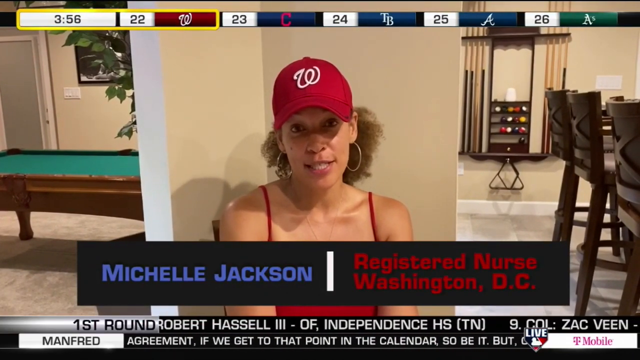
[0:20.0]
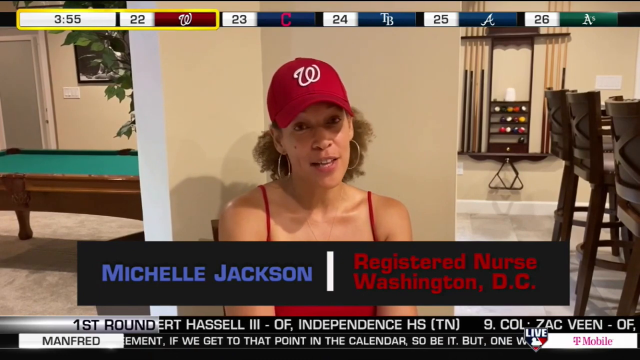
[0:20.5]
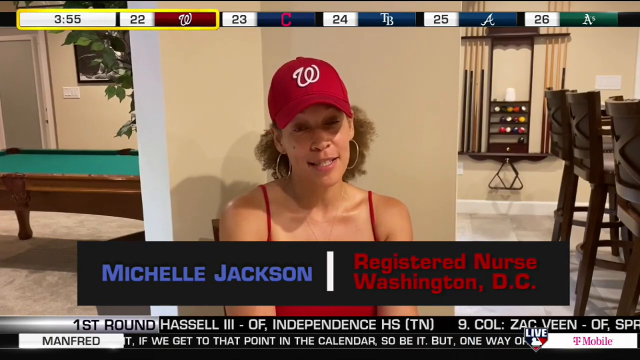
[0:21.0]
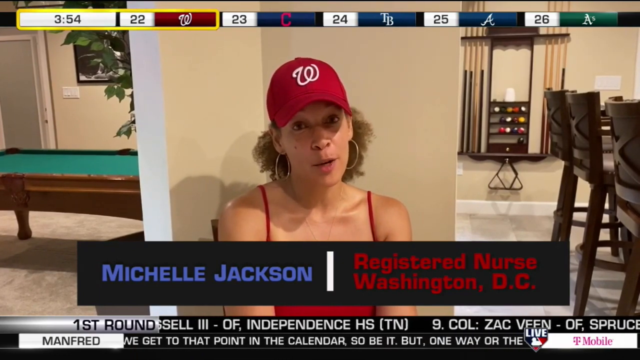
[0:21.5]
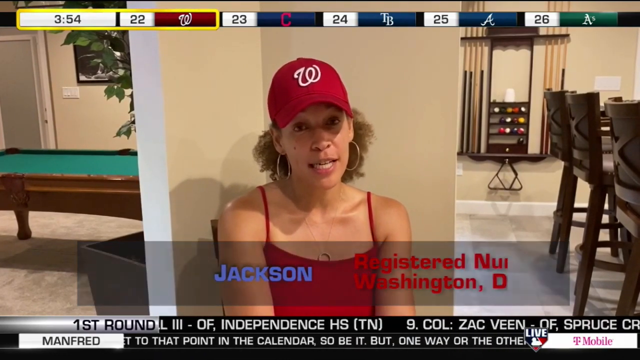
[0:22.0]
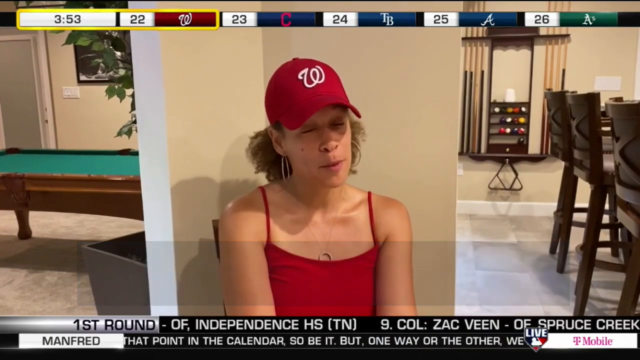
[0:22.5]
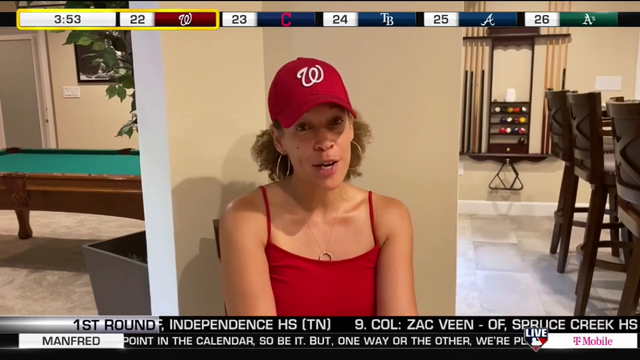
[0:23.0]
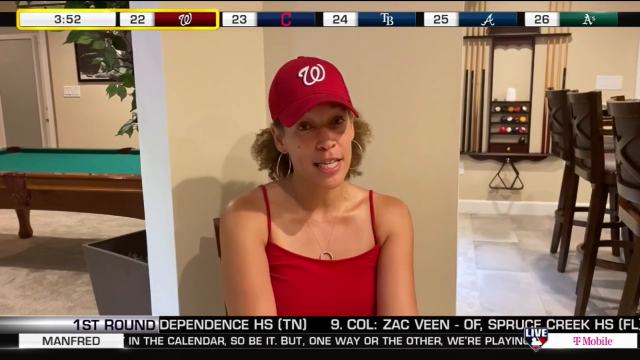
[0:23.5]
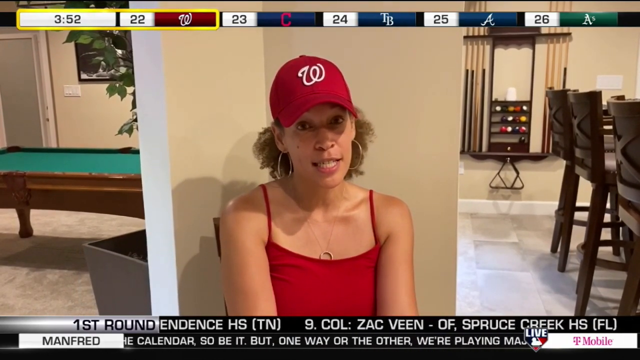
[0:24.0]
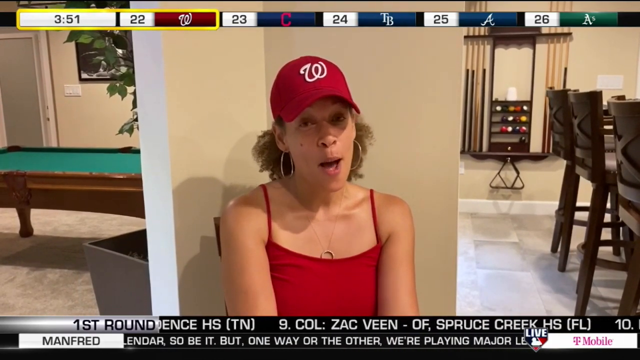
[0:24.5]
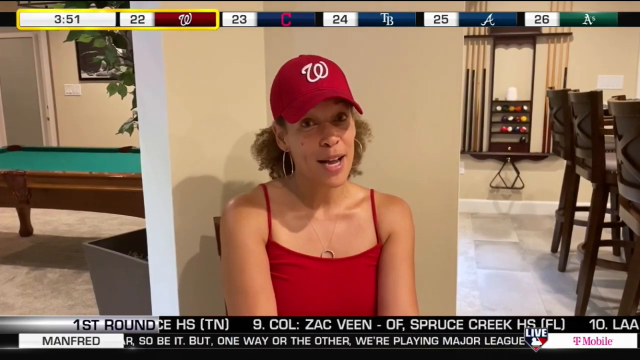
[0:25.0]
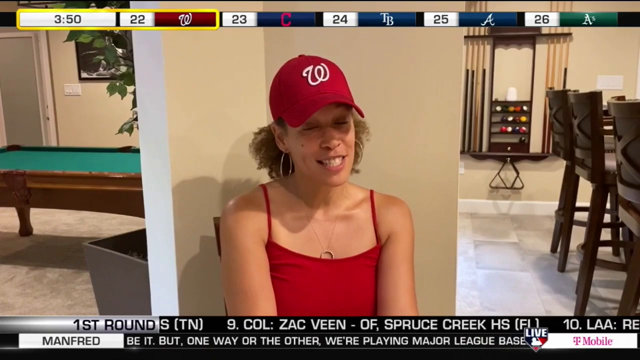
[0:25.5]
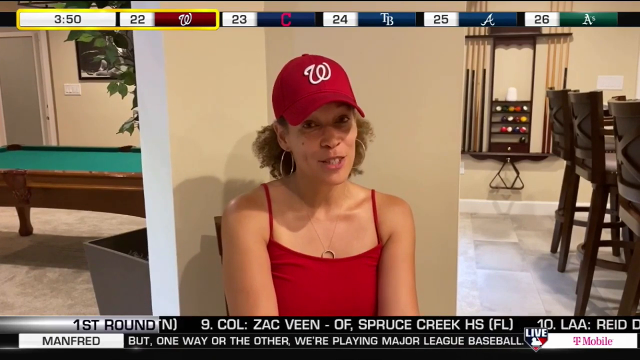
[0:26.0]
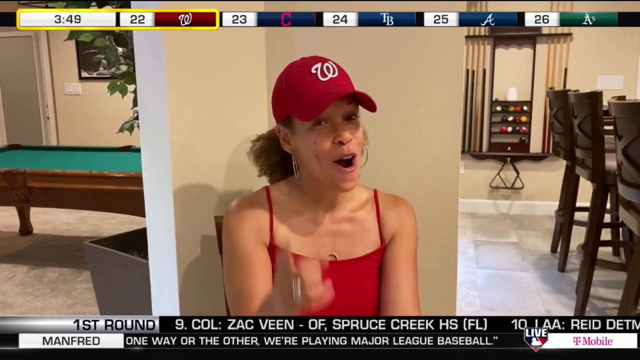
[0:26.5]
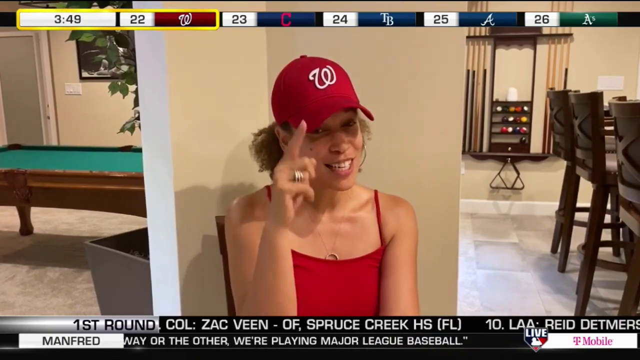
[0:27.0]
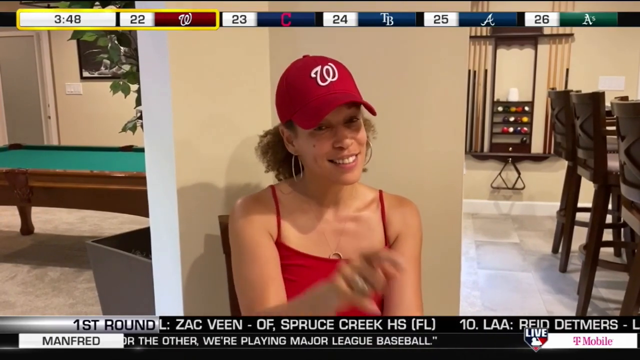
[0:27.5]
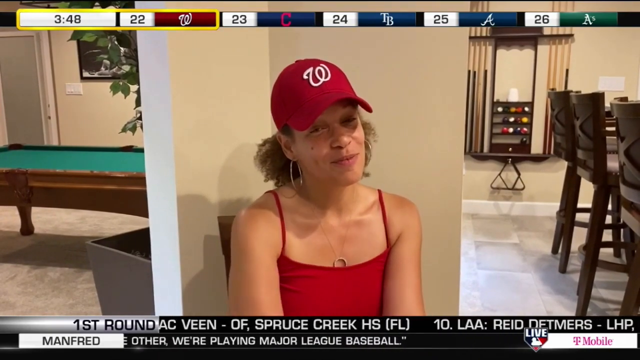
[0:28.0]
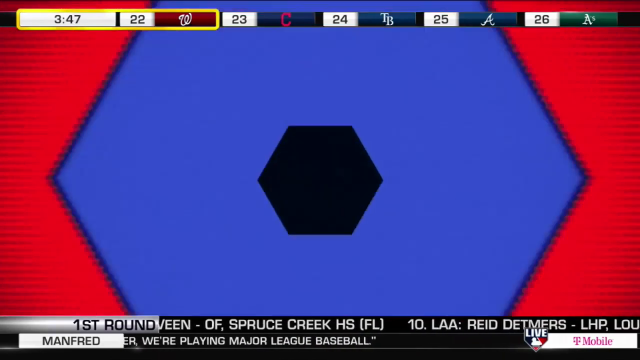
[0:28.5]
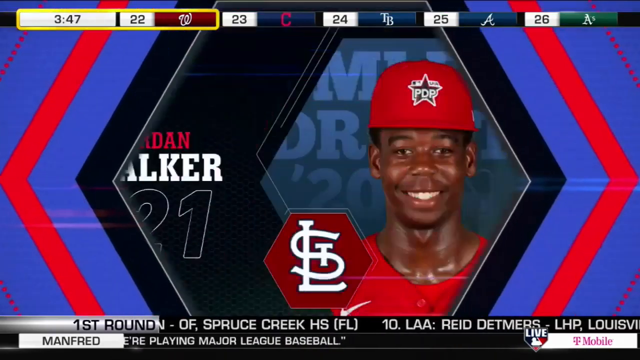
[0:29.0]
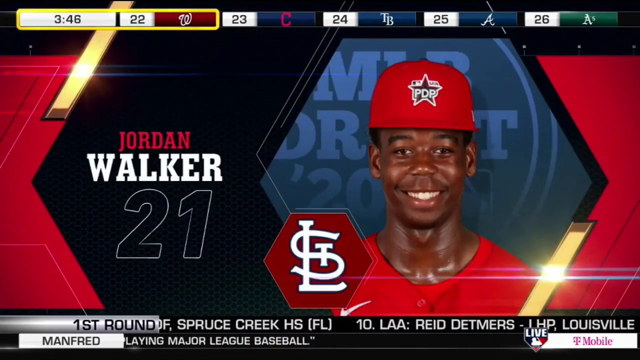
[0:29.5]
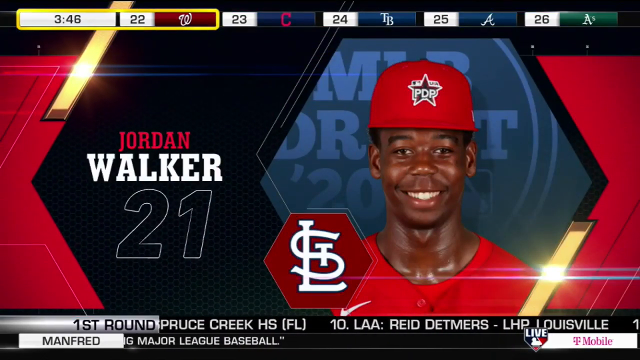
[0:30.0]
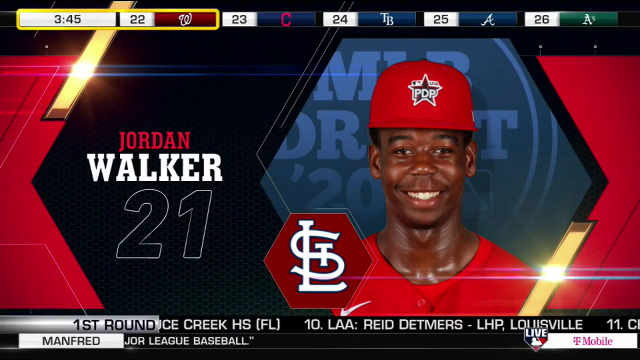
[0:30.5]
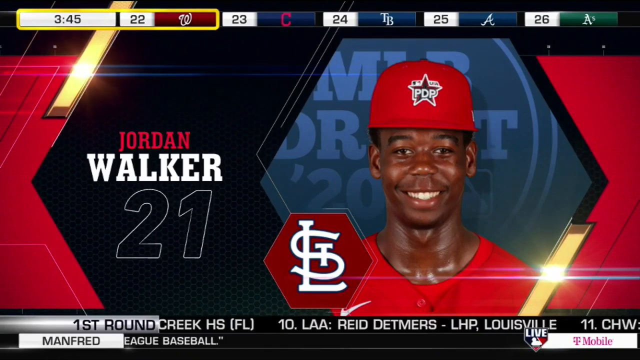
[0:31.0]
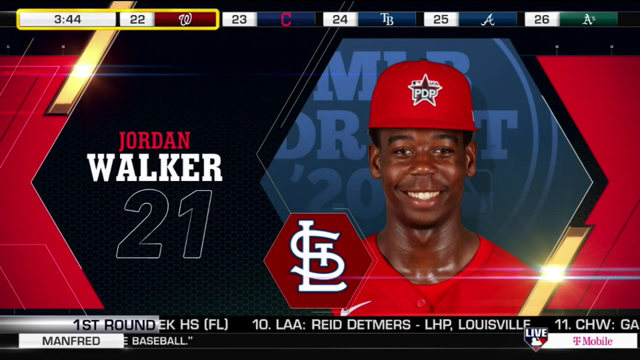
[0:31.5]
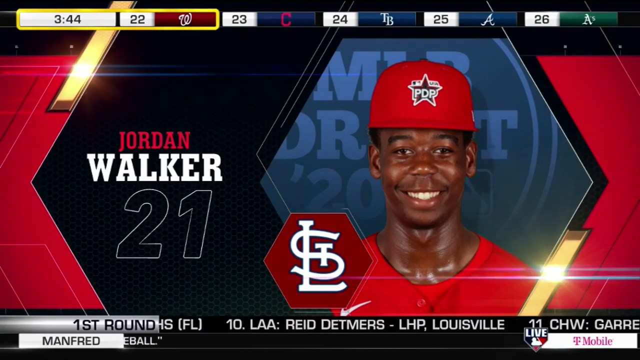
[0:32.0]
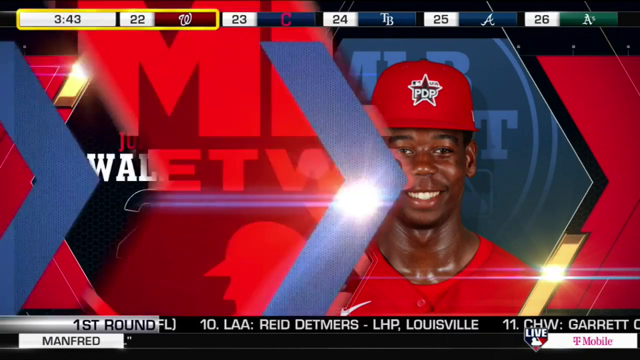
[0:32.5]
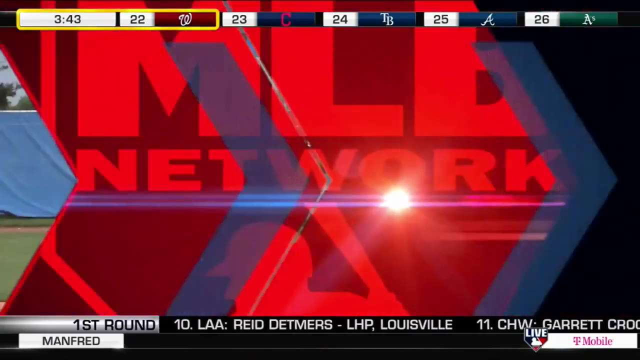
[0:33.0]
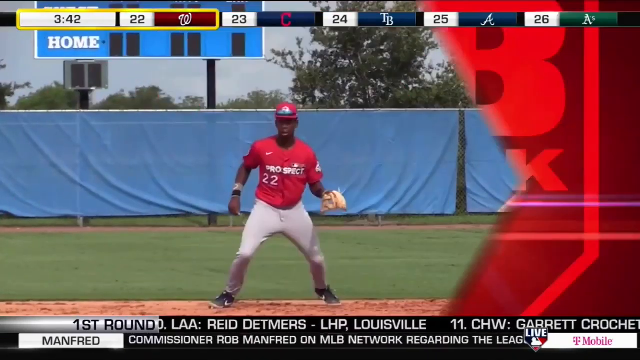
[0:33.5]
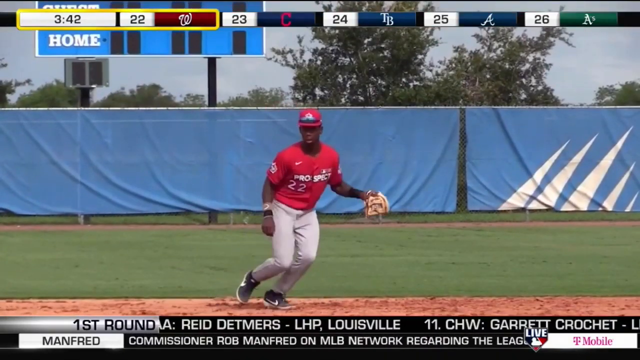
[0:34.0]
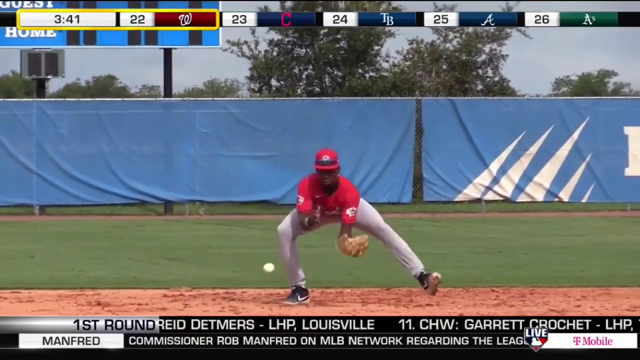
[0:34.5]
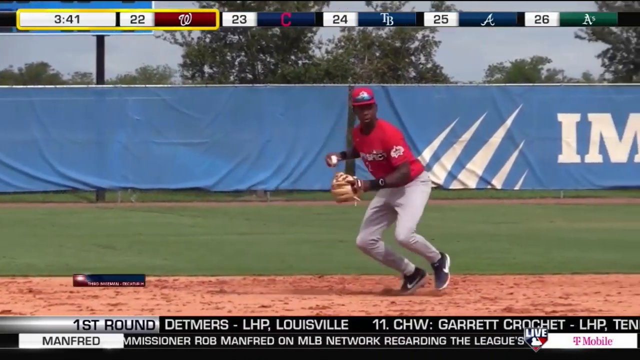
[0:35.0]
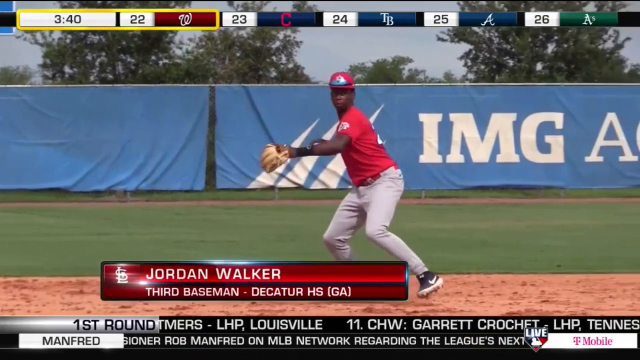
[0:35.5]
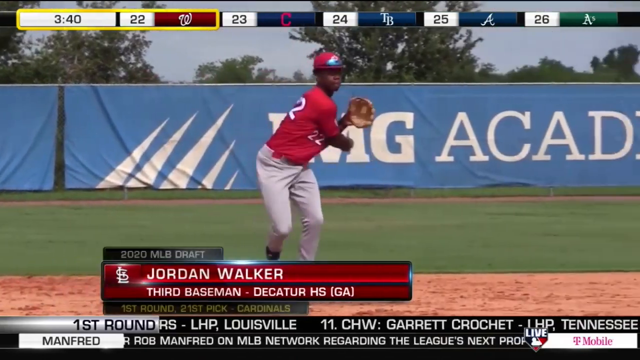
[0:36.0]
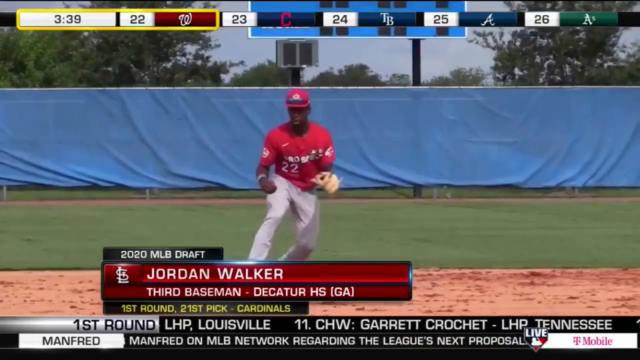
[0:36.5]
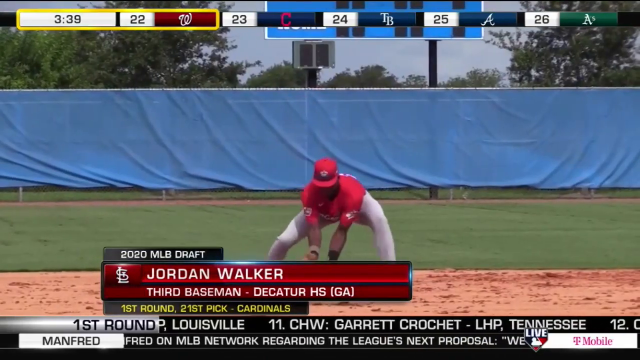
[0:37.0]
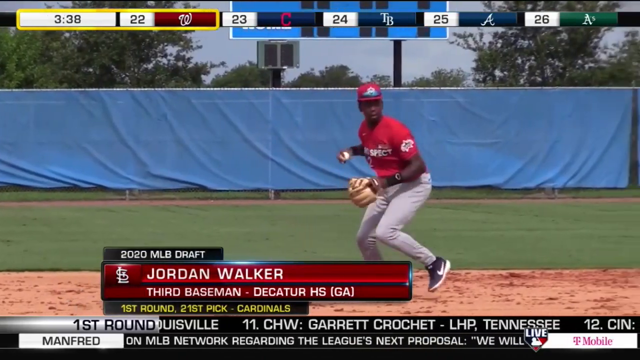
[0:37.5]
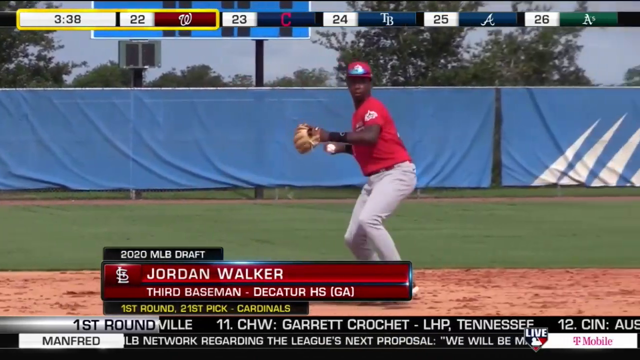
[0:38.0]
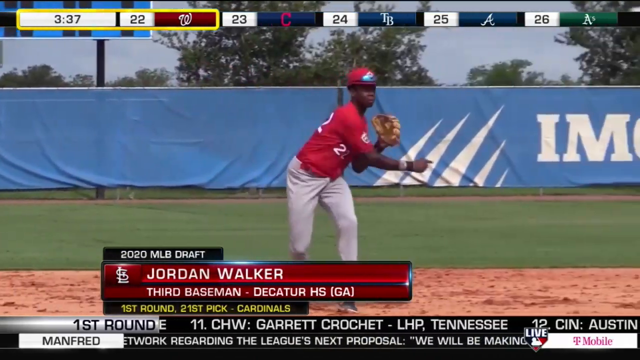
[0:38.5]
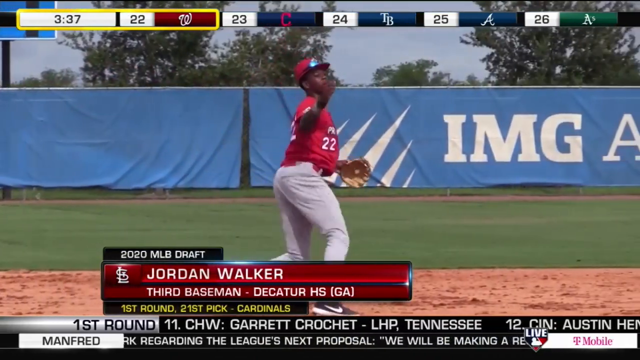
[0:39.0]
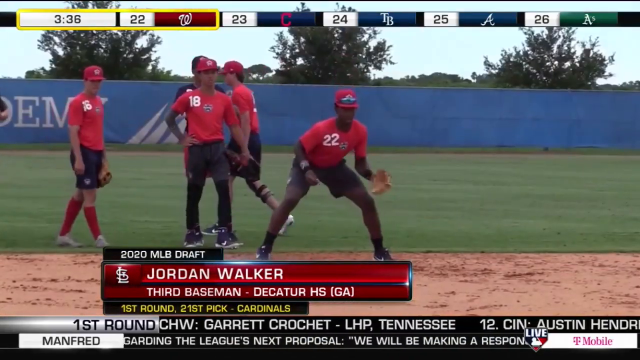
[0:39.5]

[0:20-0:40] The woman, Michelle Jackson, wears a red tank top and a red Washington hat, with her curly light brown hair pulled back under the hat and gold hoop earrings. To her left are a pool table and some sort of plant; in the background to her right are pool balls, cues and a triangle rack, and directly to her right there appears to be a bar, with three dark brown high chairs in a row. Her head is tilted slightly to the side, and she nods as she speaks, smiling. She points to her hat with her right hand and then points at the camera. The video returns to the MLB logo, and an image appears of an African American man in a red hat with the text "Jordan Walker, 21." An image of him playing follows, then video of him playing. Walker is in the field and appears to be left-handed, wearing his glove on his left hand. He wears white pants and a red jersey and hat. He scoops up a ground ball, takes two steps, and throws to the base.